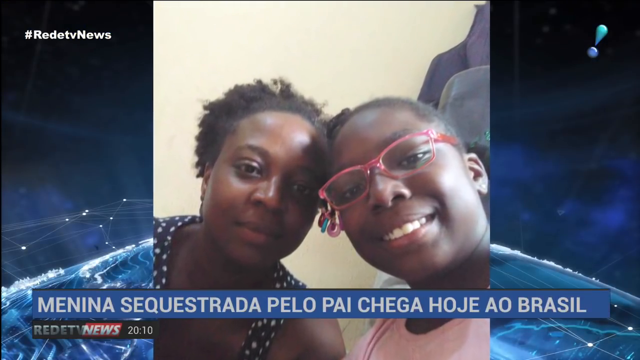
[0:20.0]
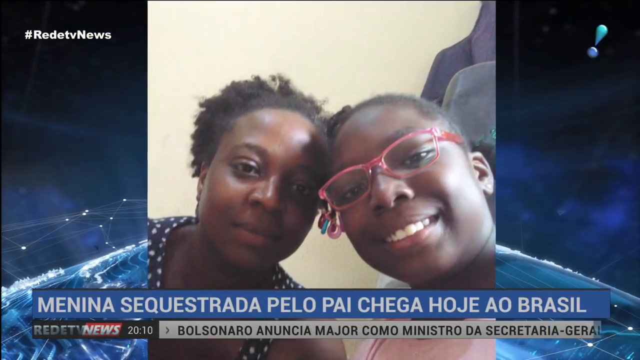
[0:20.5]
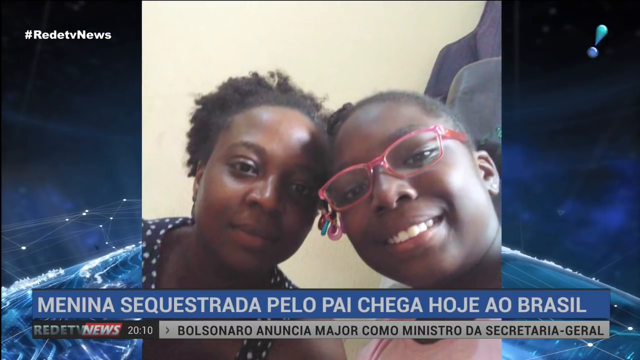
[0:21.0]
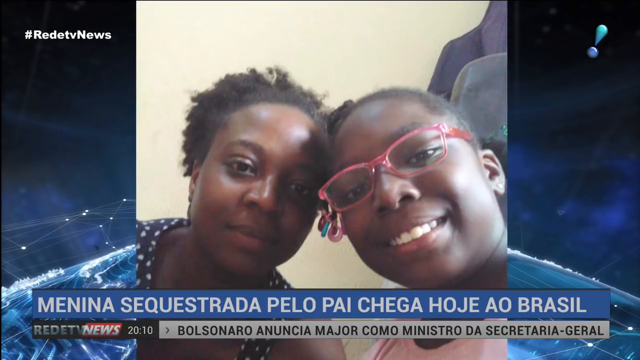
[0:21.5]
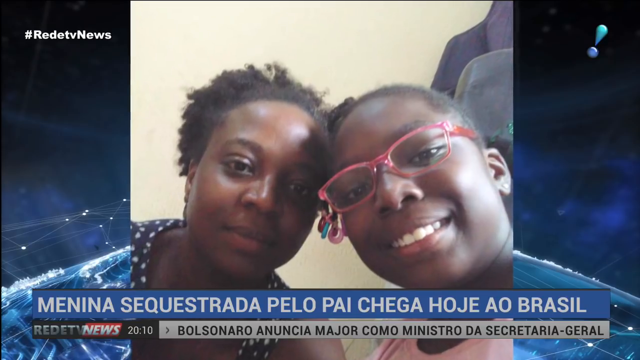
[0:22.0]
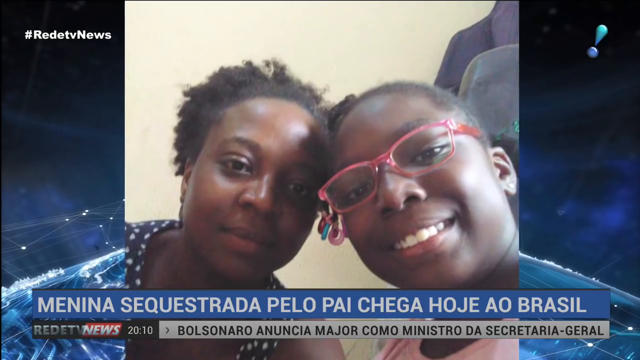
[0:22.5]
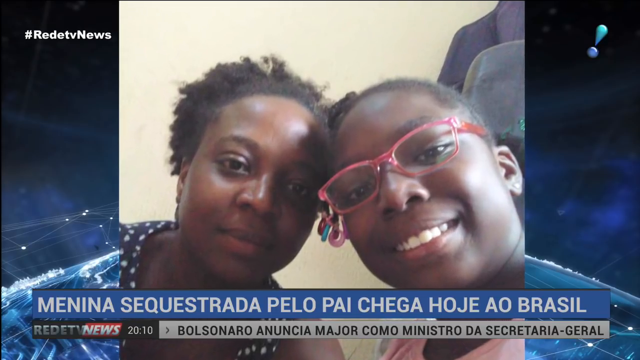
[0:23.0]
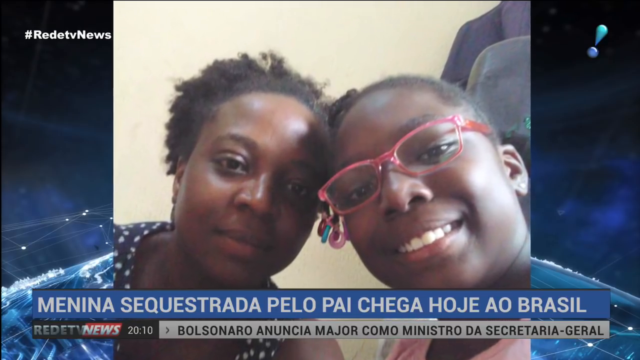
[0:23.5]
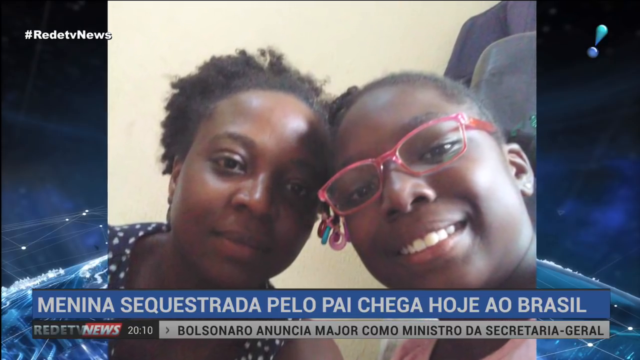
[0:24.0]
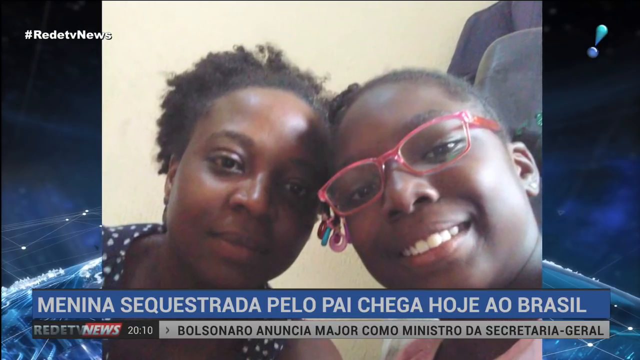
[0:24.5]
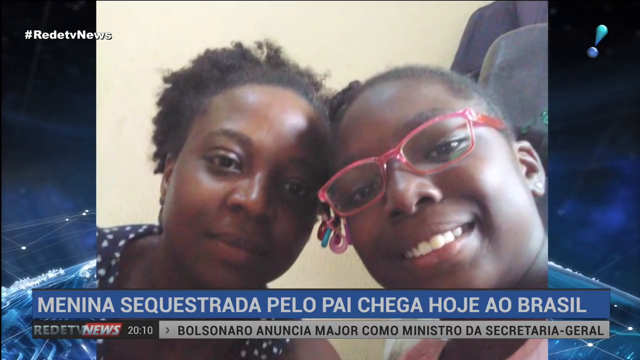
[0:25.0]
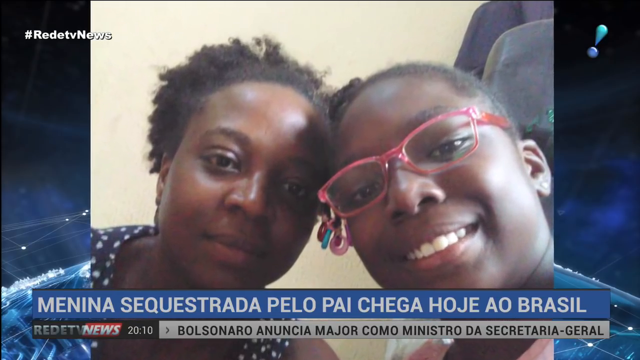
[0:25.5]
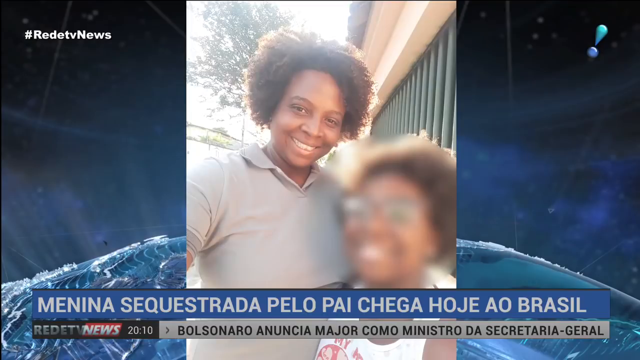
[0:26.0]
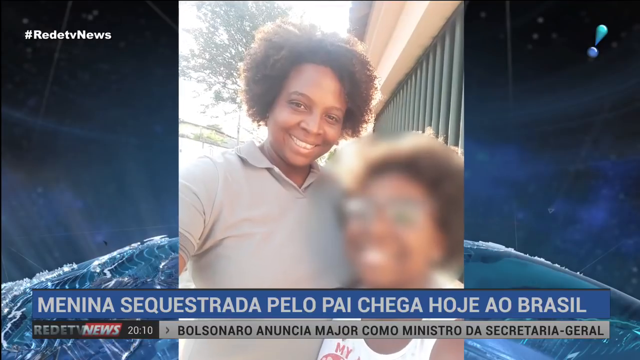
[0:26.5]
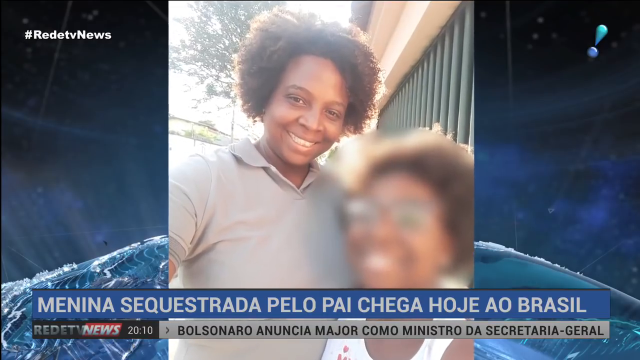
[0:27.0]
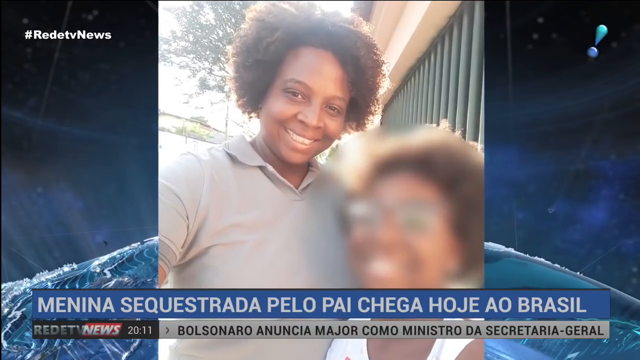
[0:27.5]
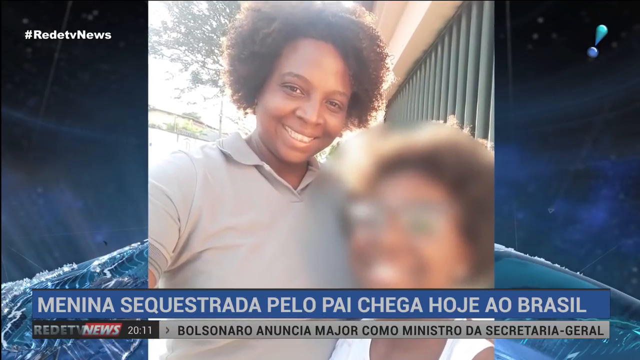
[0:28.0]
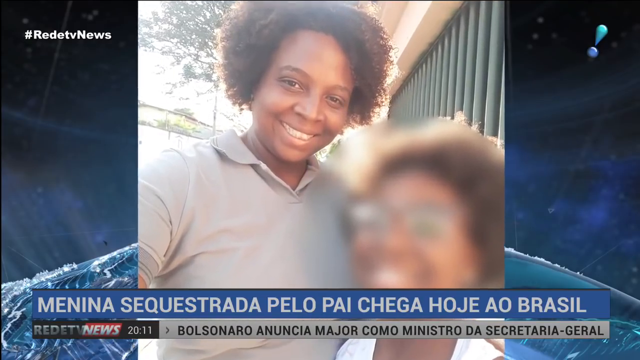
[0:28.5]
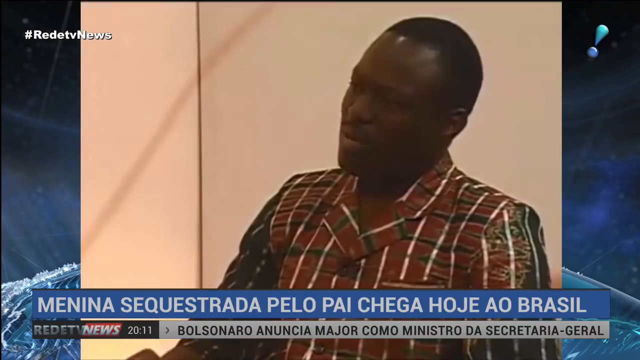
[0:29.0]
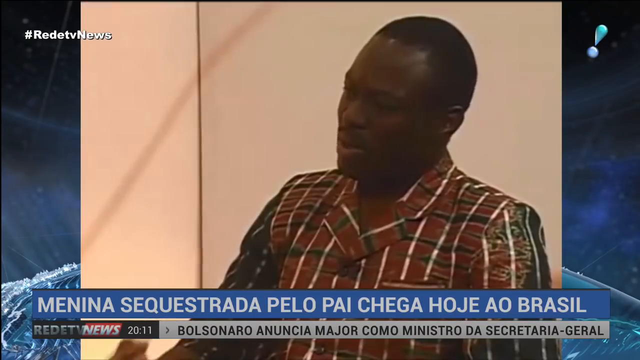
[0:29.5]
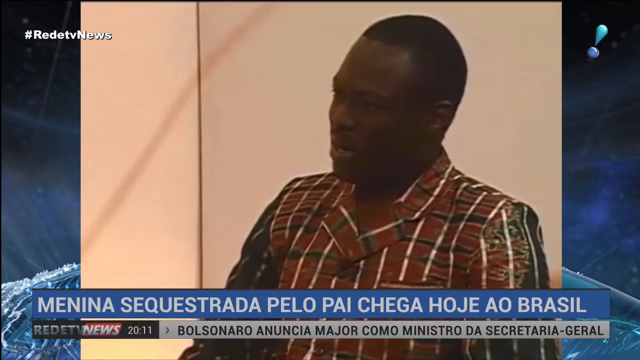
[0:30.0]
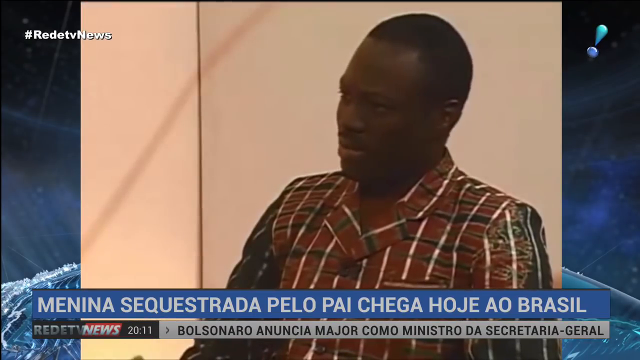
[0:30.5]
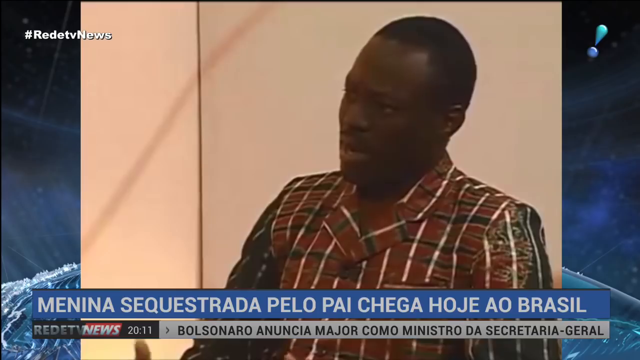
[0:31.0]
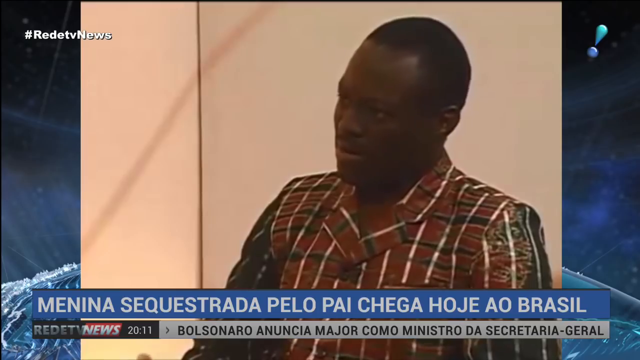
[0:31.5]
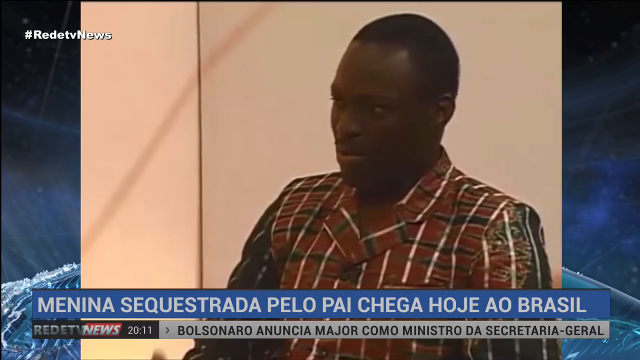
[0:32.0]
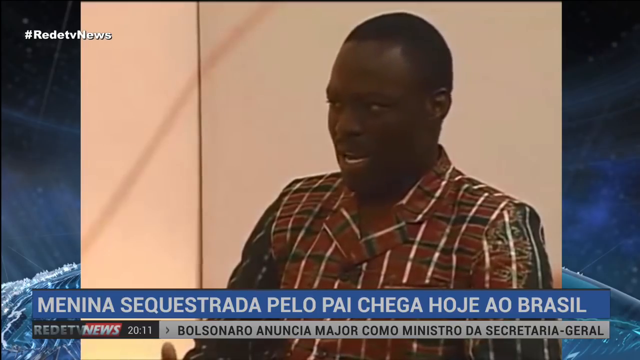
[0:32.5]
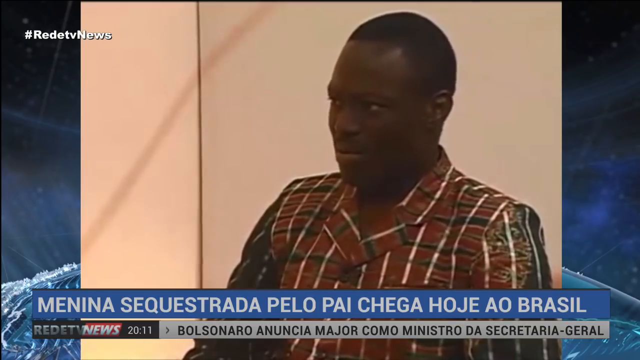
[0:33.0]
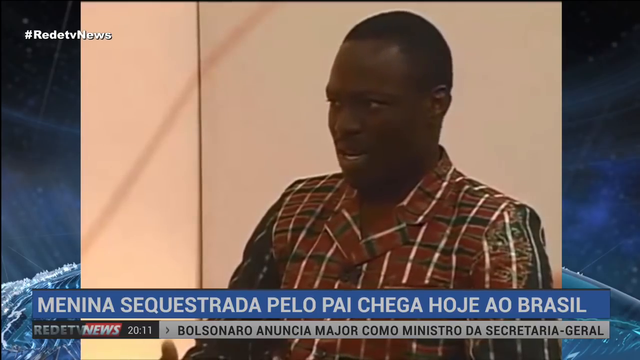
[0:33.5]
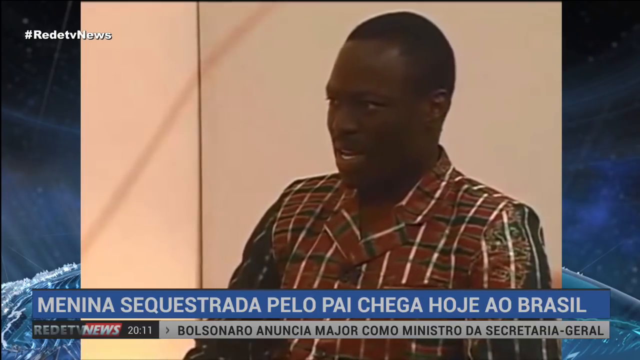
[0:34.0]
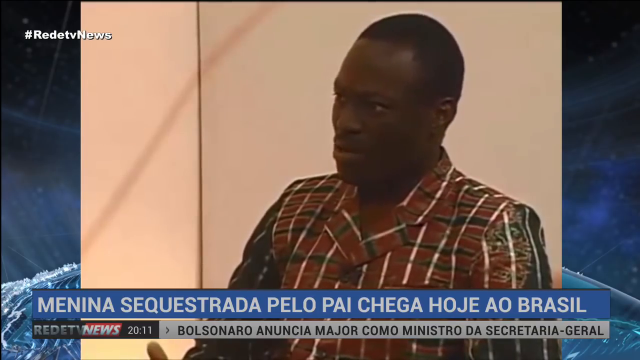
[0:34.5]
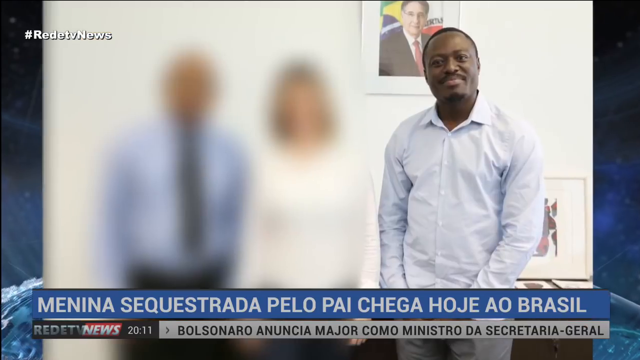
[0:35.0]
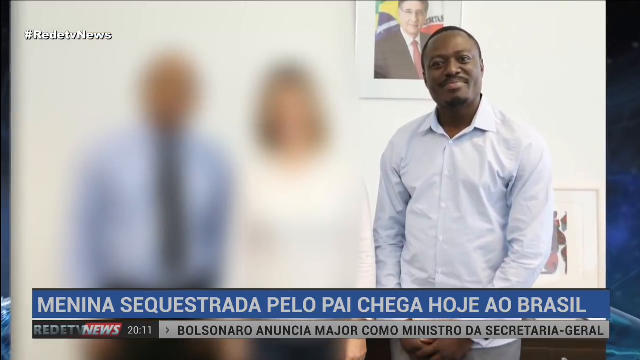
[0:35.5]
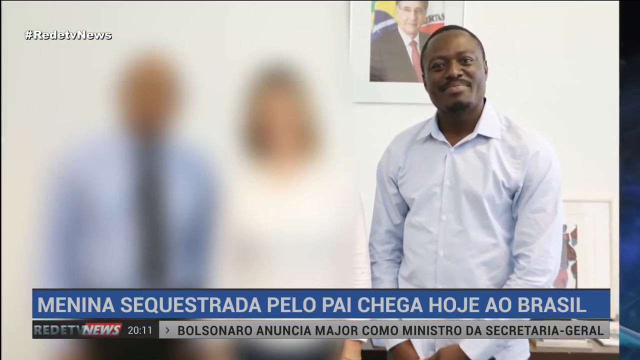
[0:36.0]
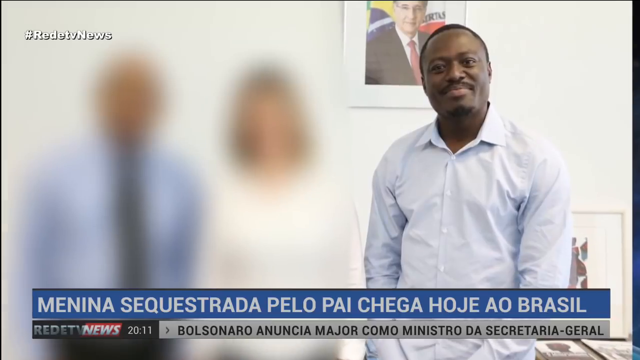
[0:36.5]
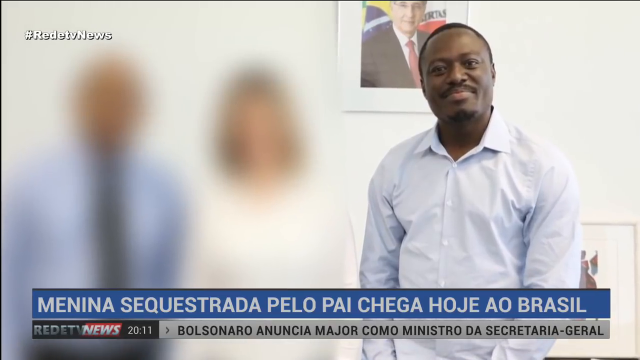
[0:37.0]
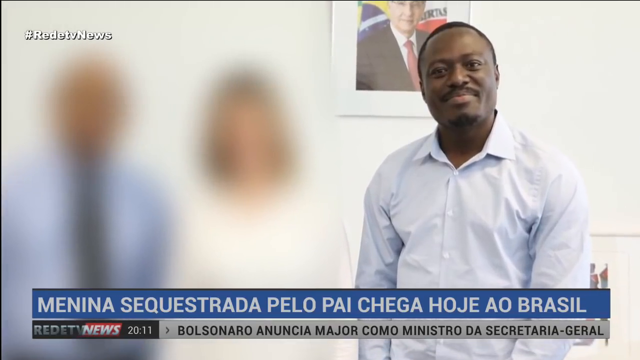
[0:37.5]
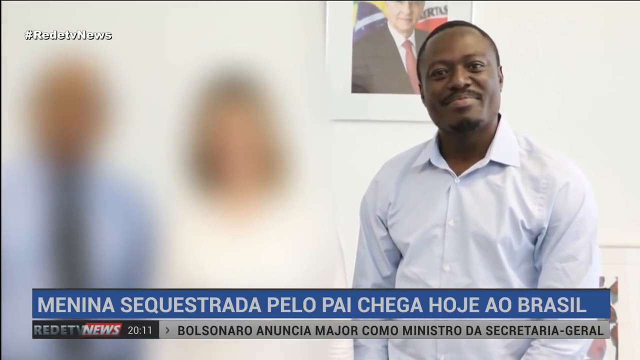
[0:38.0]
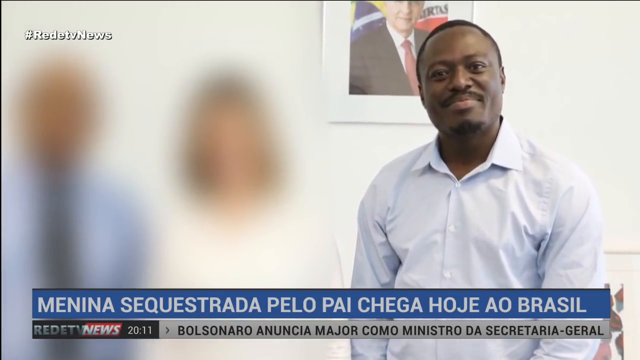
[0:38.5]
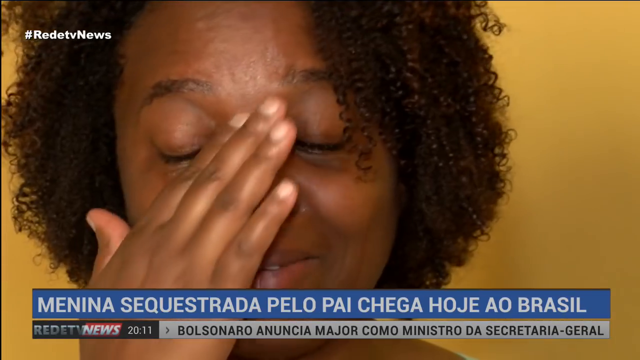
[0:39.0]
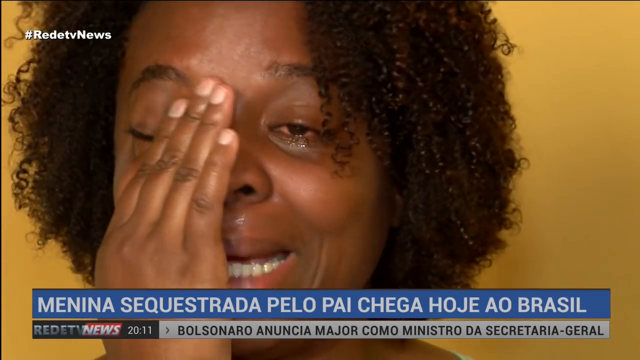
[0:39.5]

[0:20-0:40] Two women pose for a picture with their foreheads together; one of them has pink glasses. Underneath is a blue bar with white words in Spanish, with "Re-D TV News" and the time 2010, and a white bar with Spanish writing as well. Two other women are shown, one taller than the other; the one on the right has glasses. A man in a very colorful brown shirt with designs and lines down it appears to be being interviewed. Another man in a white button-down shirt poses for a picture next to two other people who are blanked out, grayed out, apparently so their identities remain private.